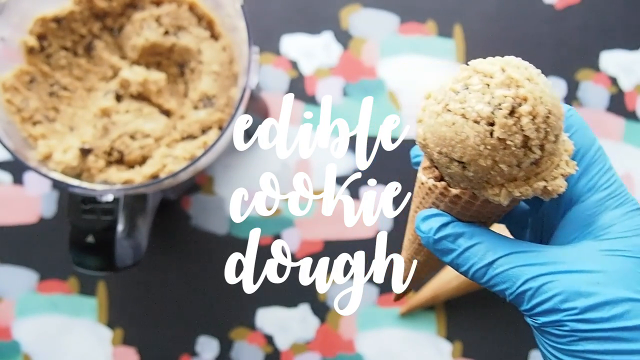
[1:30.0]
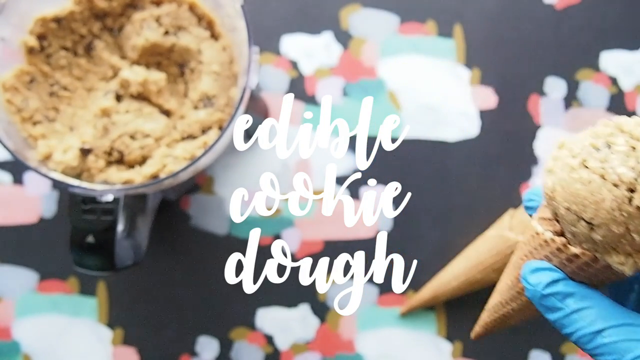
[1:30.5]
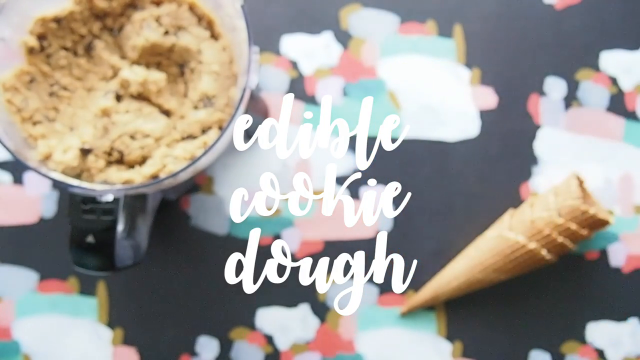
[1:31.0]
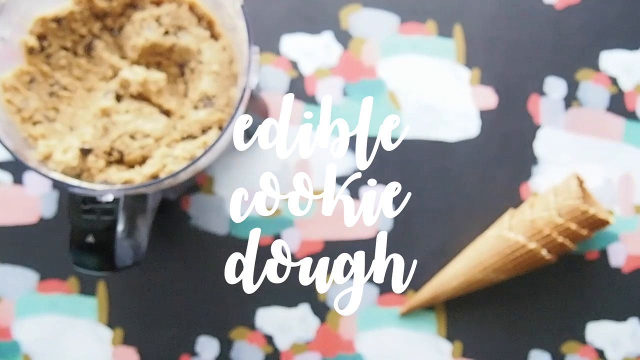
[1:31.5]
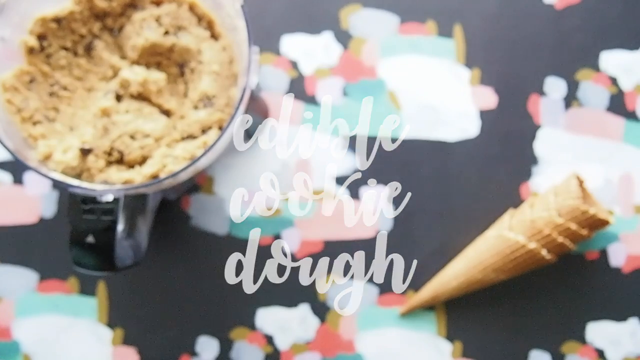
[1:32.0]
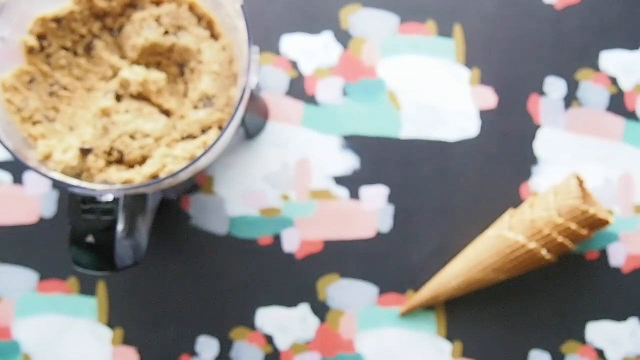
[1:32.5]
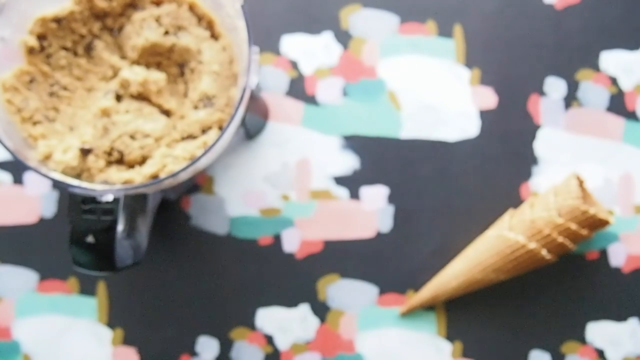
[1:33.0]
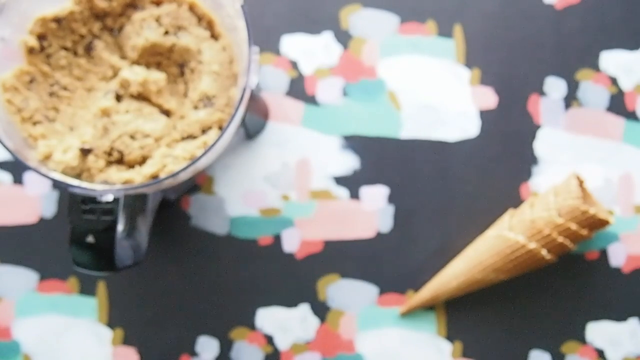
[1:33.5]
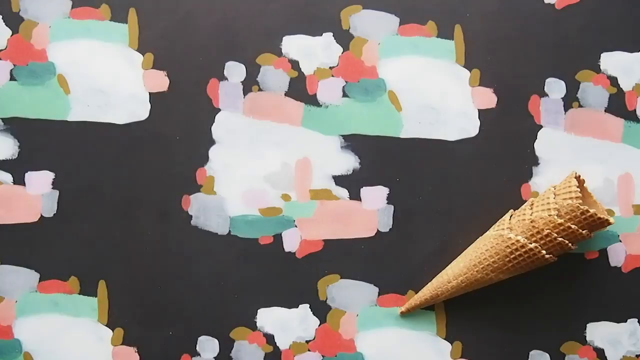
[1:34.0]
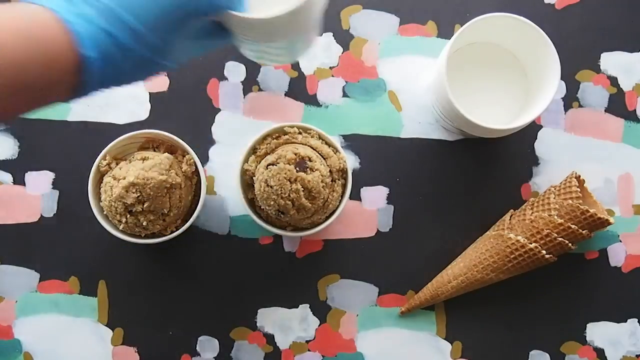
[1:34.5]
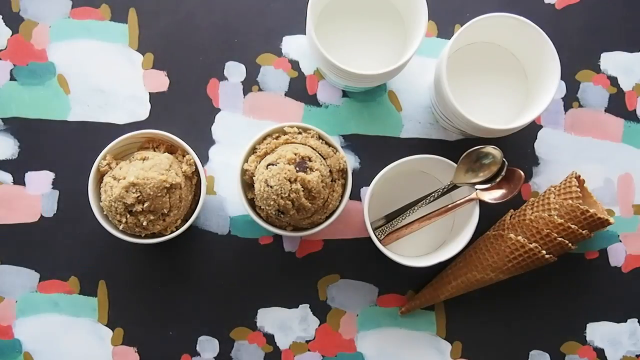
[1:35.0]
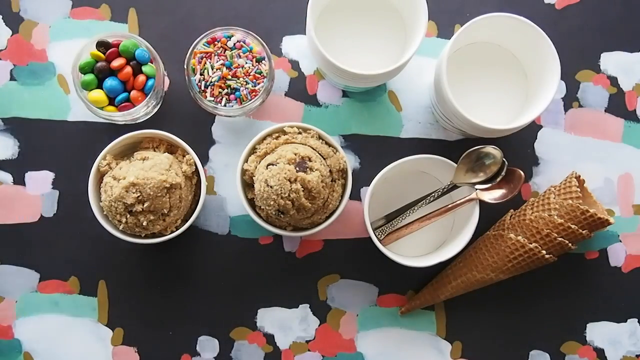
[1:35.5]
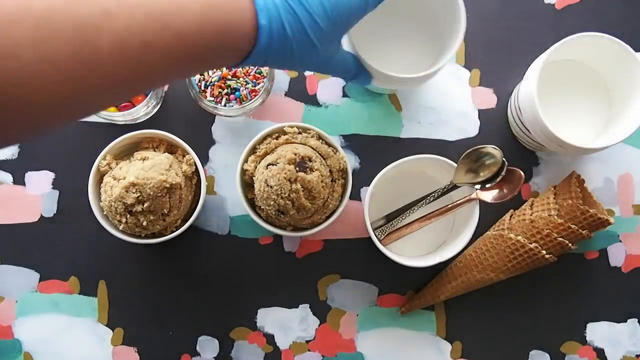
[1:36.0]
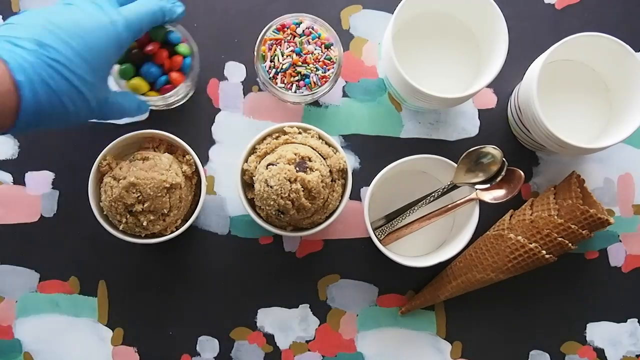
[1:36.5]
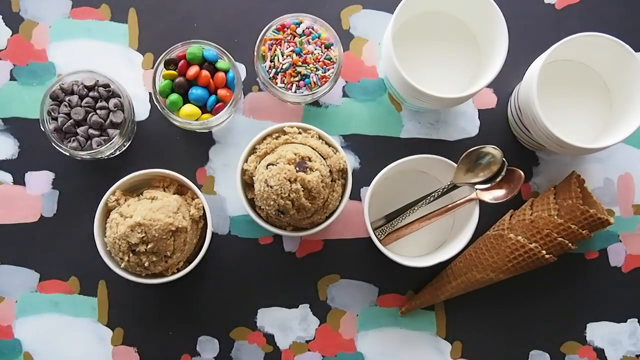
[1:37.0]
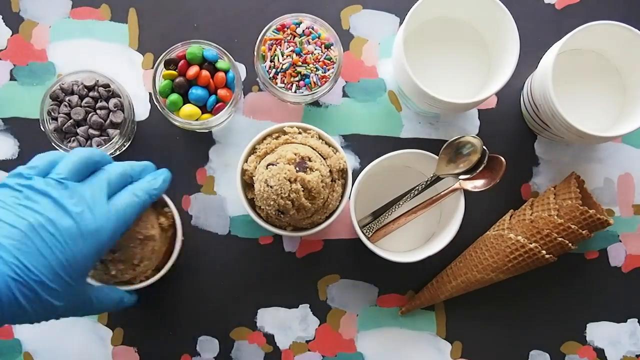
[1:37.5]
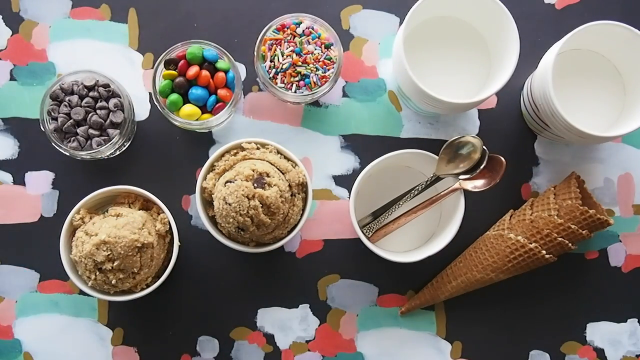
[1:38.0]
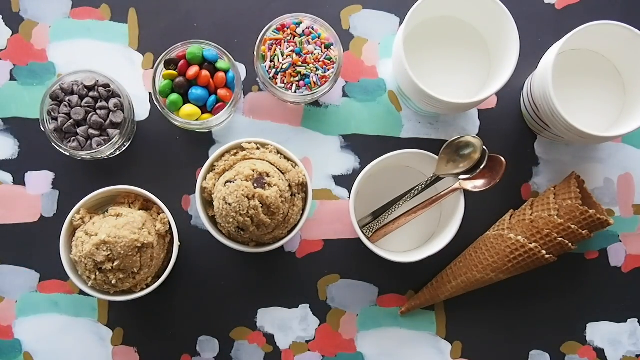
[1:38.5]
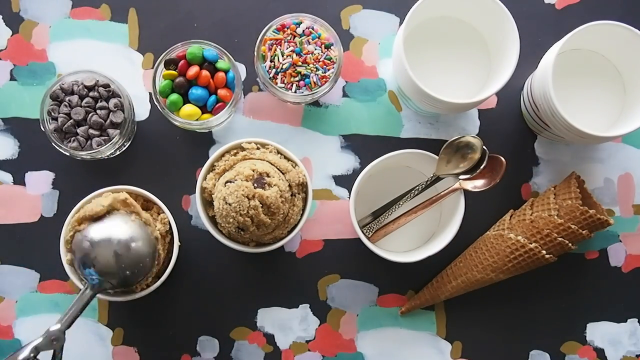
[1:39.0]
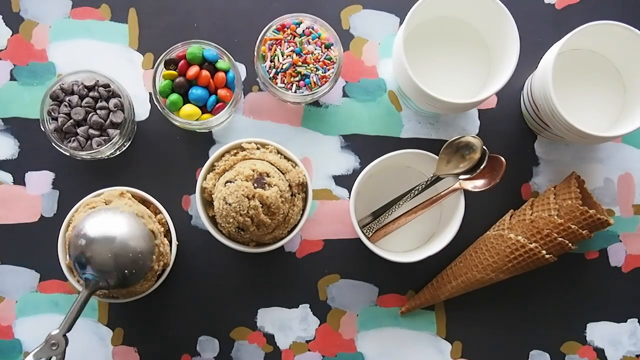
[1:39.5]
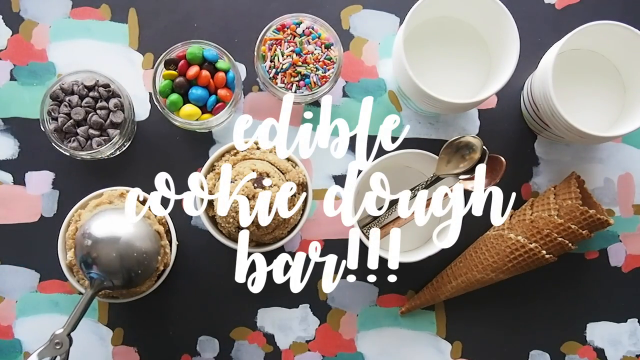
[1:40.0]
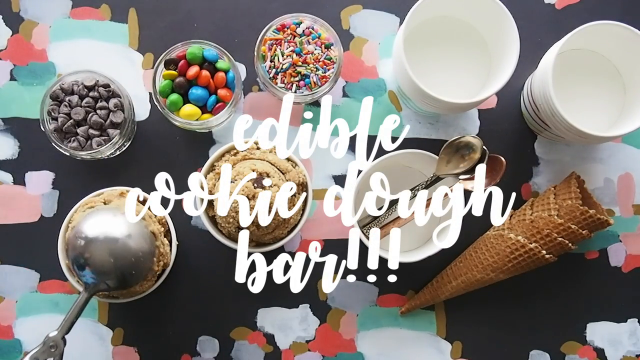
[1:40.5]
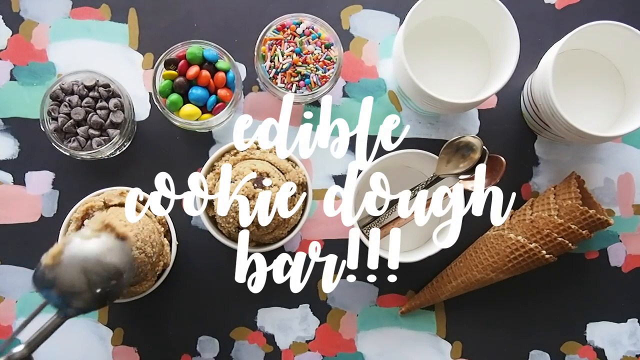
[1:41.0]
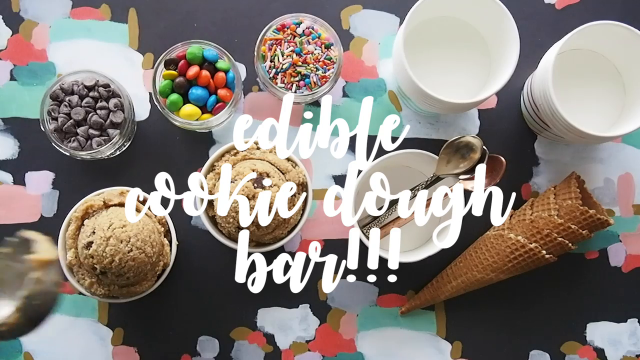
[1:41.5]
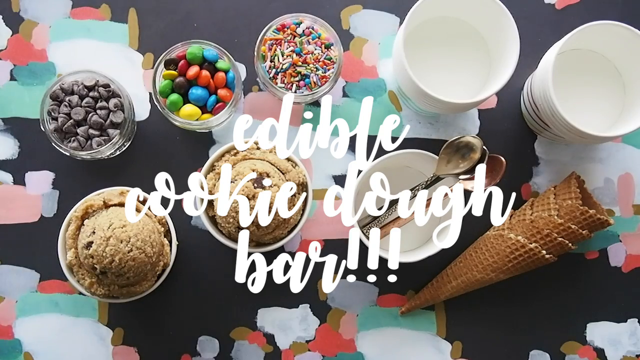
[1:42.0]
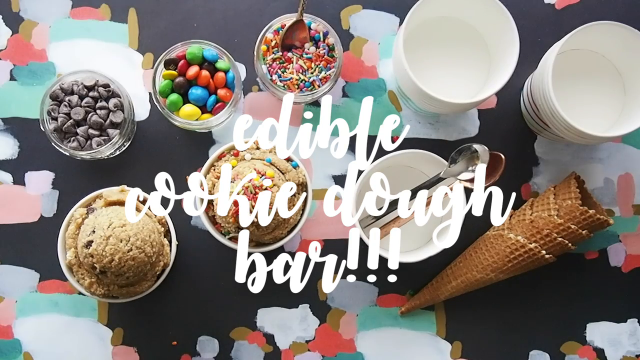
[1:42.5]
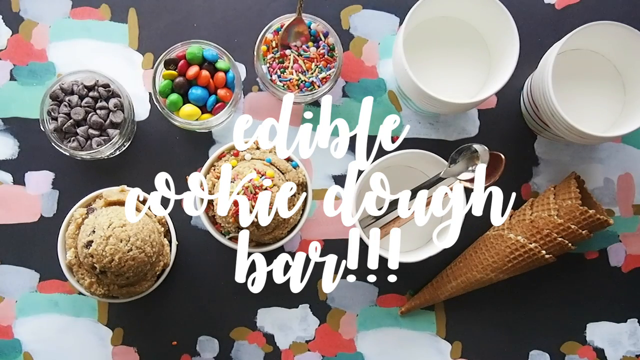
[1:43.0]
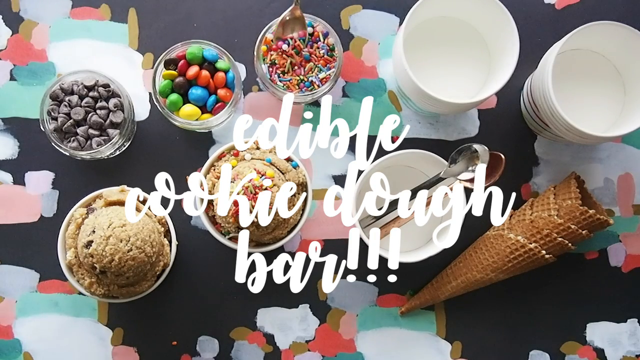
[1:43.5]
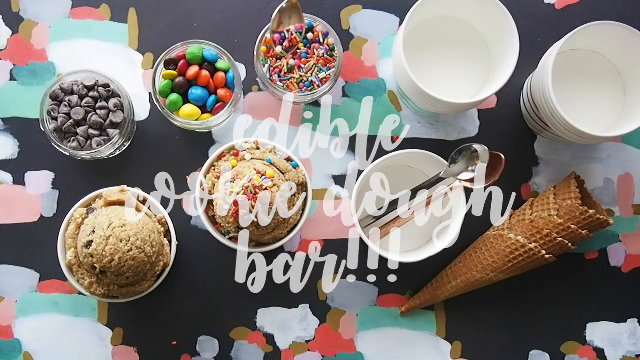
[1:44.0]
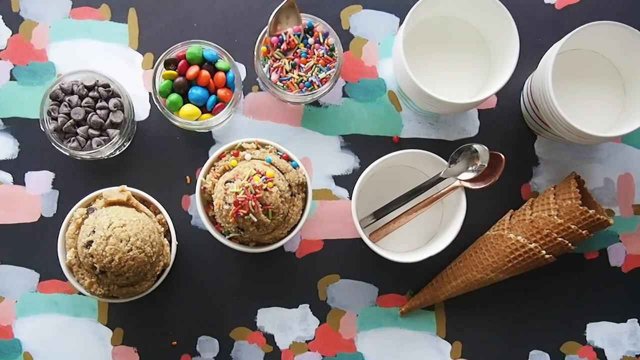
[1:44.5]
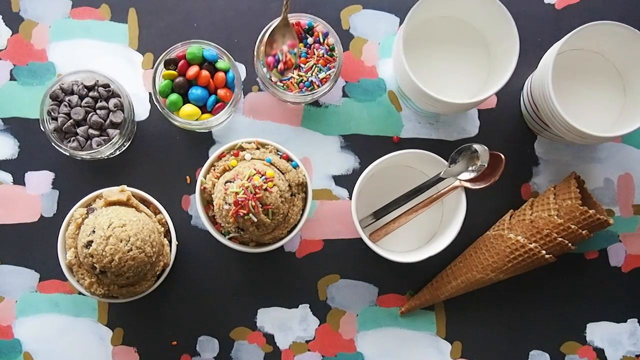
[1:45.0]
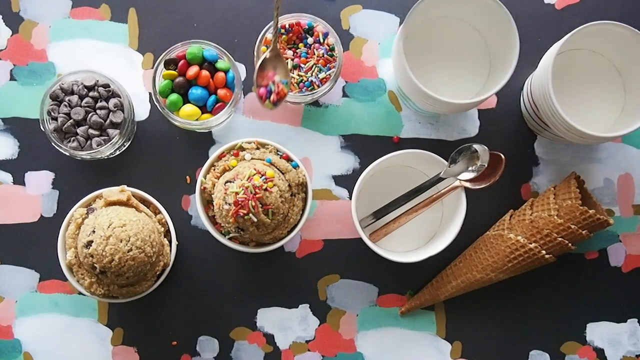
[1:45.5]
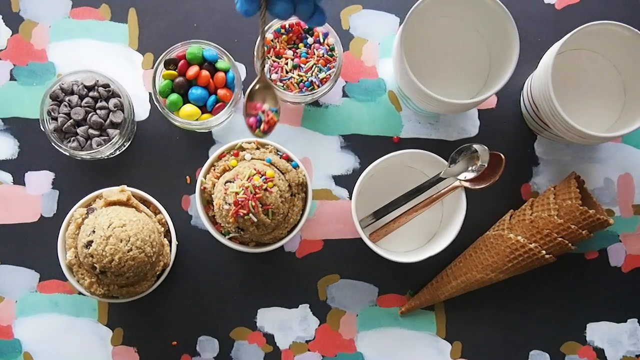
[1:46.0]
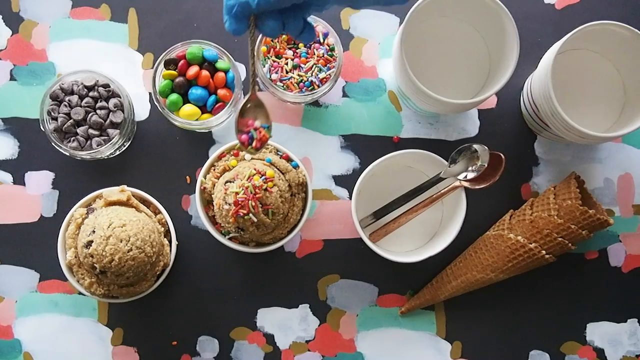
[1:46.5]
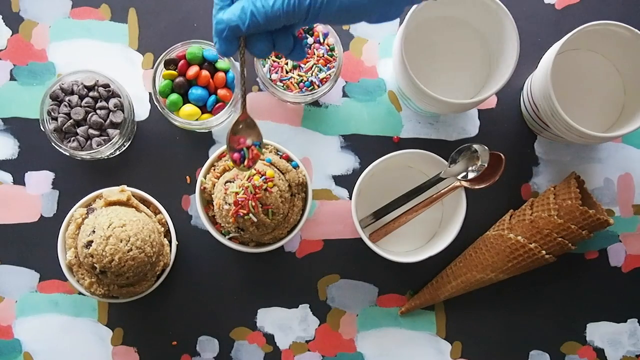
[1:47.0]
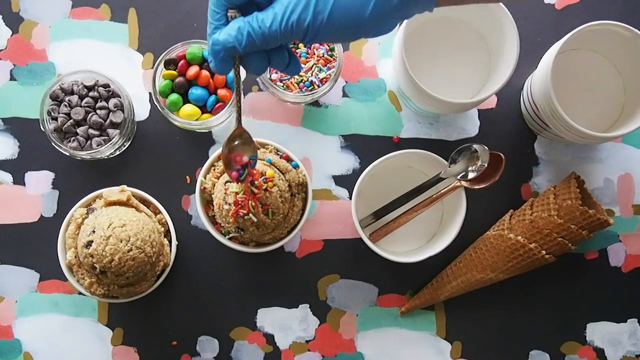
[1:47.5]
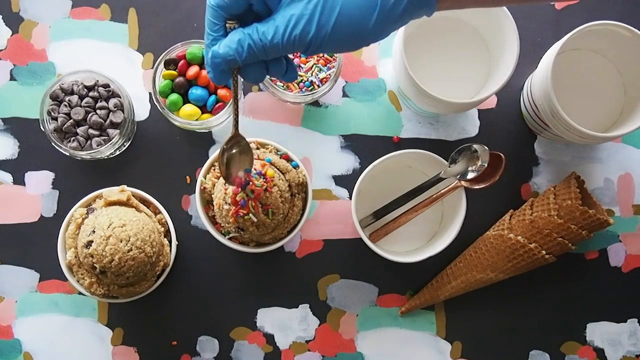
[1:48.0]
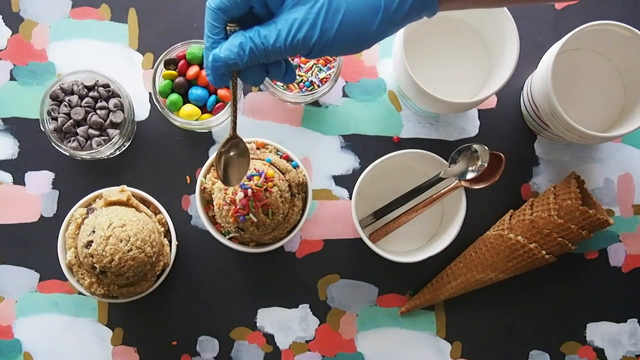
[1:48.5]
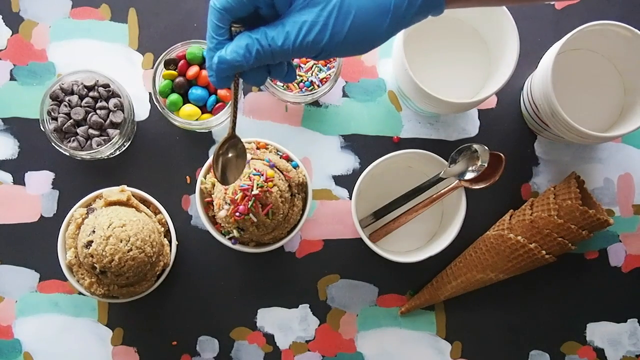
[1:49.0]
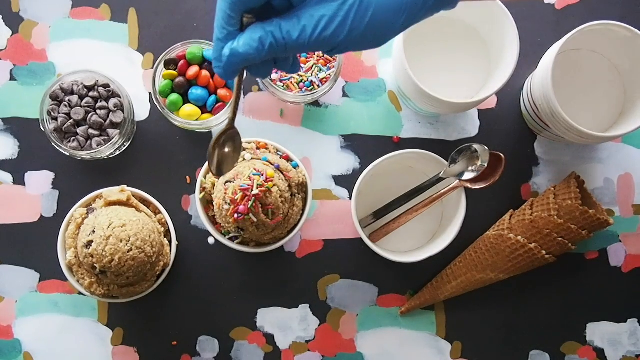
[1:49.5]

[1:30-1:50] The man wearing blue gloves holds the corn with the edible cooking dough and shows it to the camera; the dough is brown and the corn is also brown. The dough is then scooped and served into plastic cups or tumblers, with sprinkles and treats nearby. A spoon scoops sprinkles and sprinkles them on top of the dough. Everything is on a table with many colours that look like bakery colours.